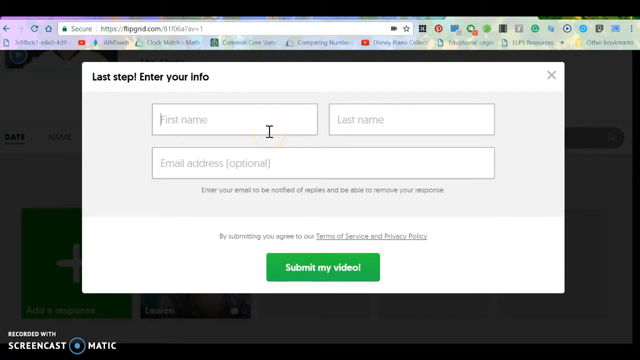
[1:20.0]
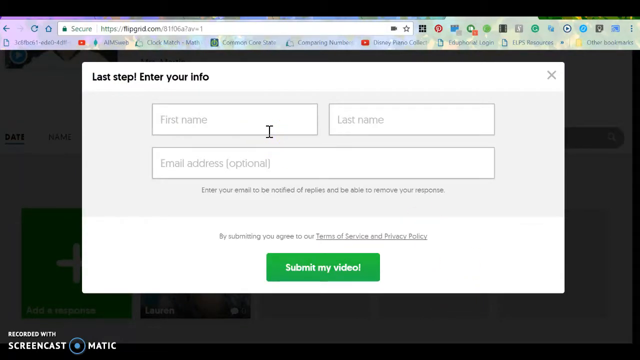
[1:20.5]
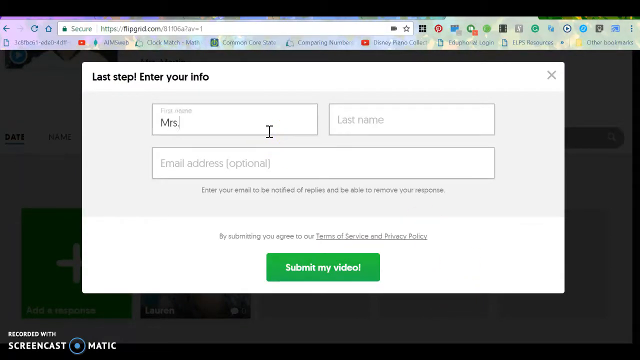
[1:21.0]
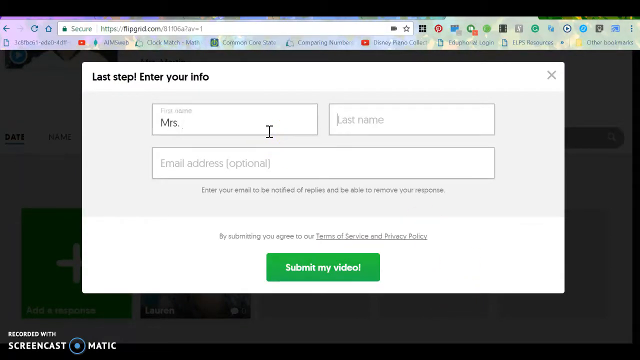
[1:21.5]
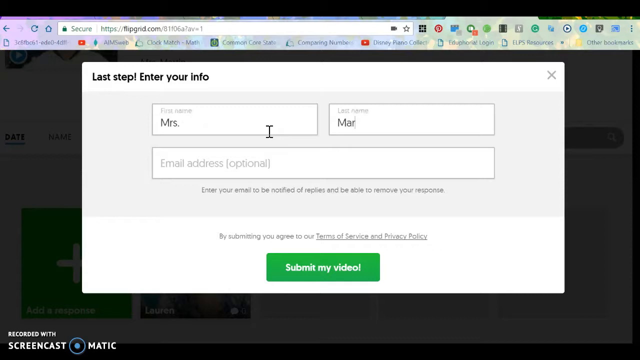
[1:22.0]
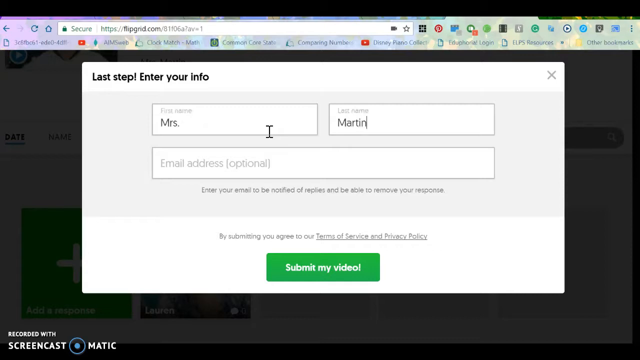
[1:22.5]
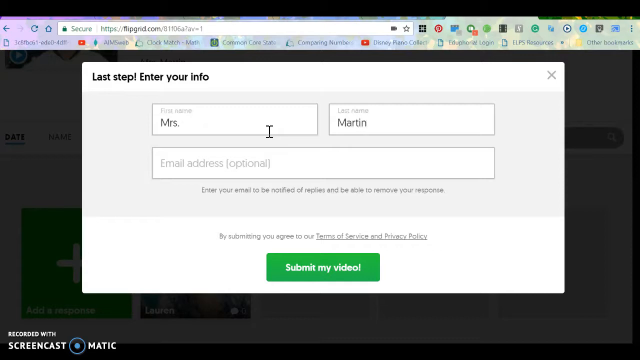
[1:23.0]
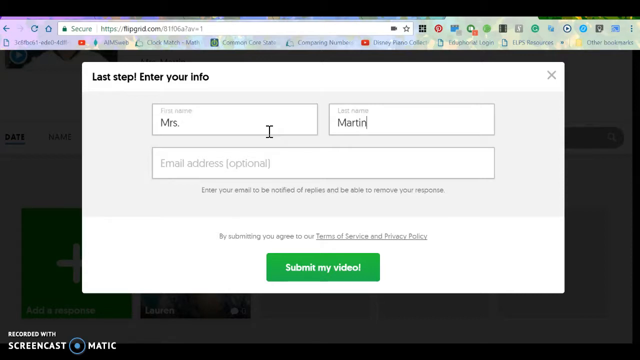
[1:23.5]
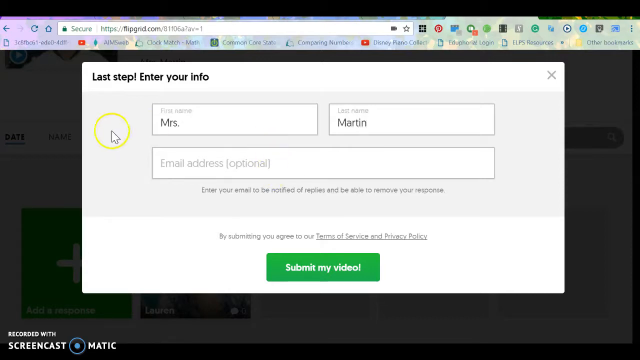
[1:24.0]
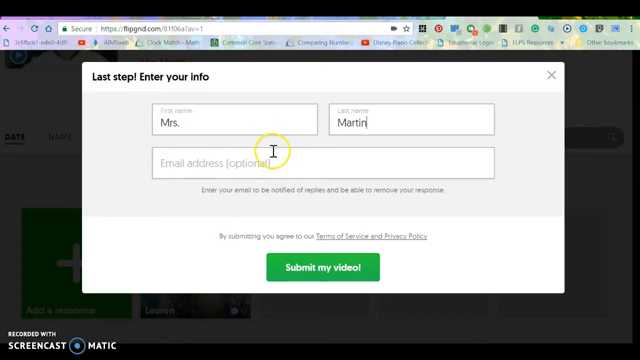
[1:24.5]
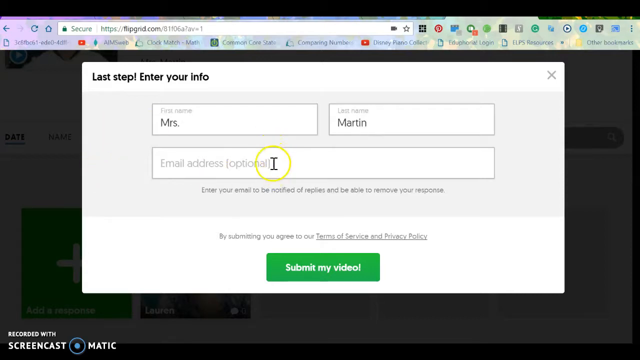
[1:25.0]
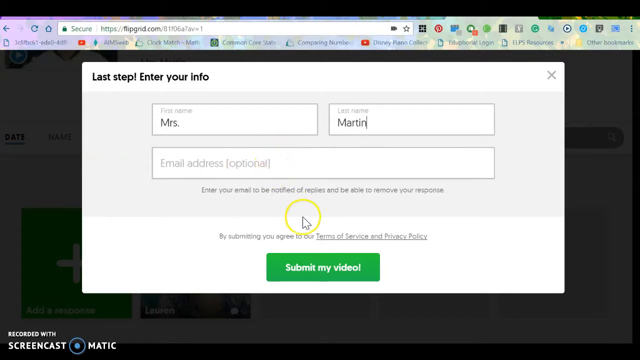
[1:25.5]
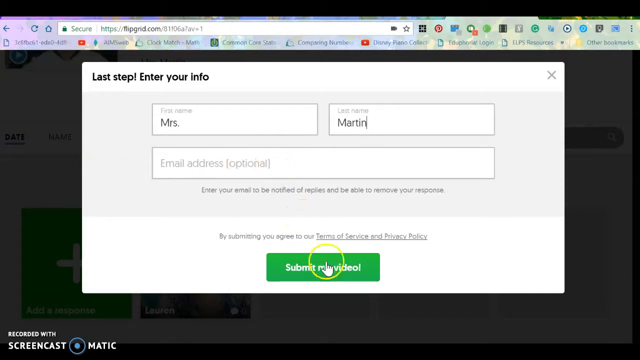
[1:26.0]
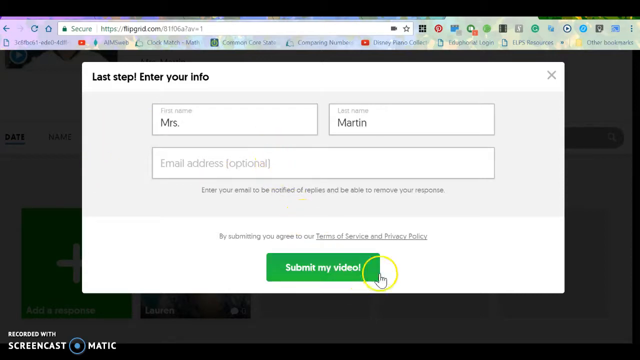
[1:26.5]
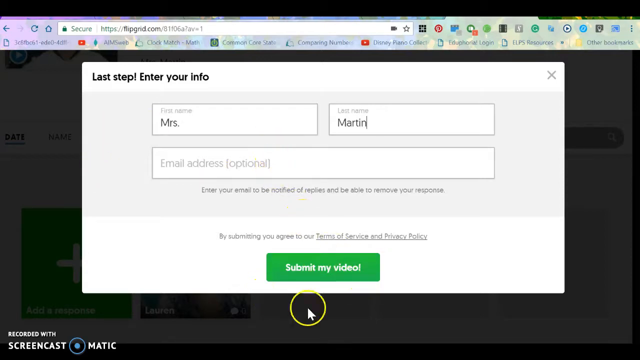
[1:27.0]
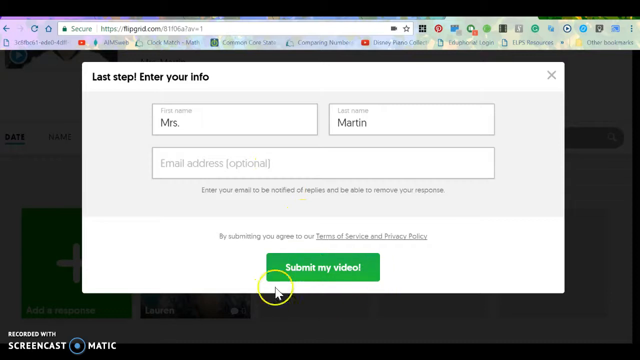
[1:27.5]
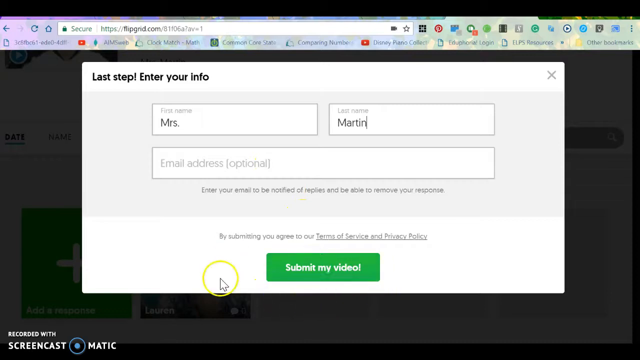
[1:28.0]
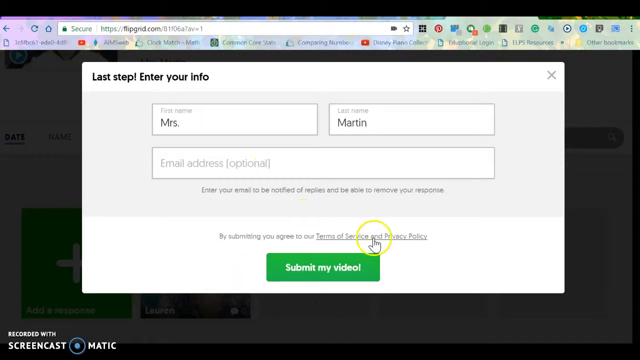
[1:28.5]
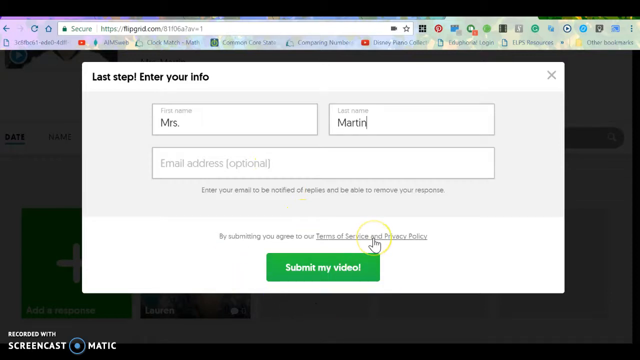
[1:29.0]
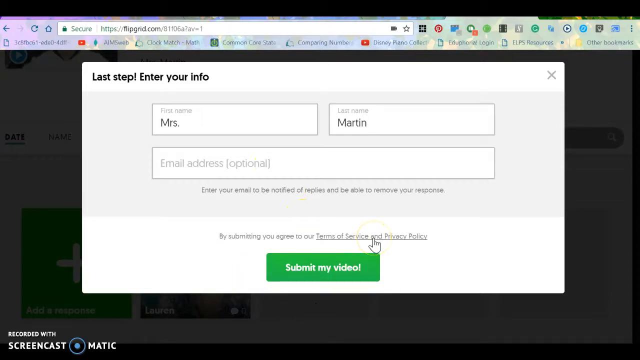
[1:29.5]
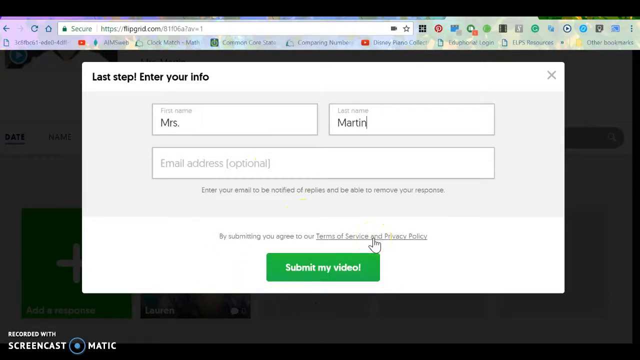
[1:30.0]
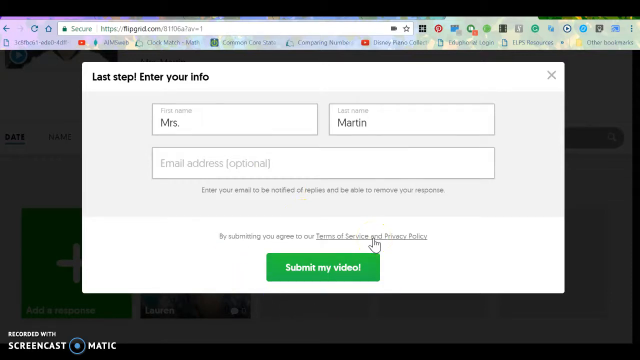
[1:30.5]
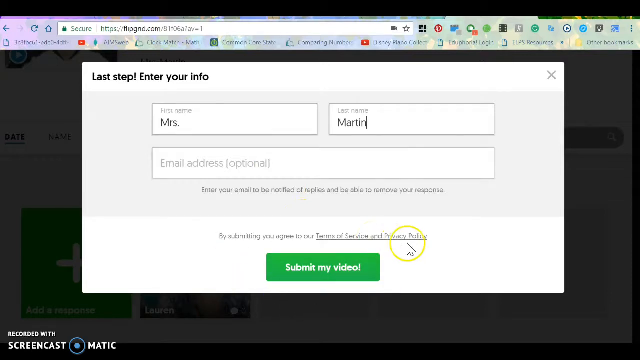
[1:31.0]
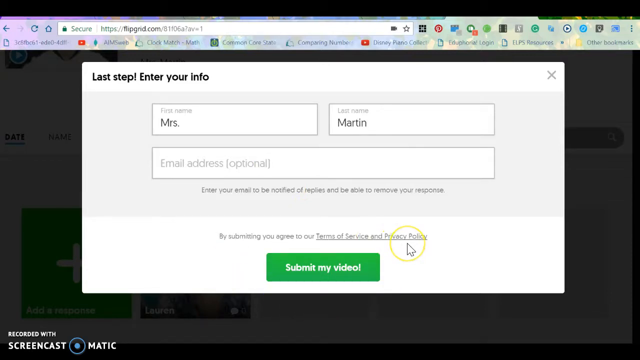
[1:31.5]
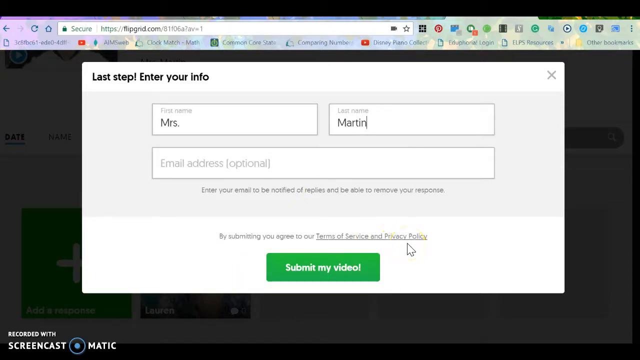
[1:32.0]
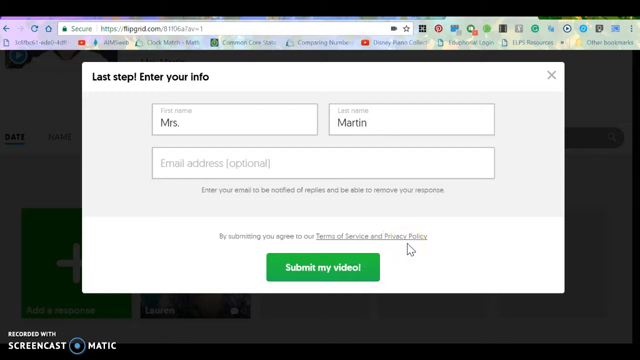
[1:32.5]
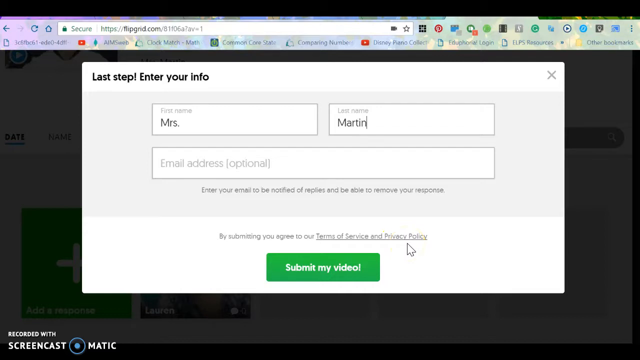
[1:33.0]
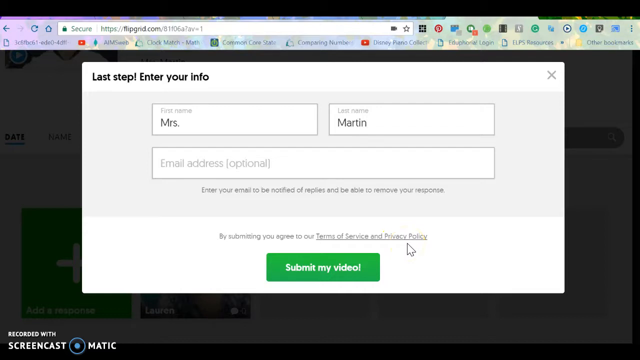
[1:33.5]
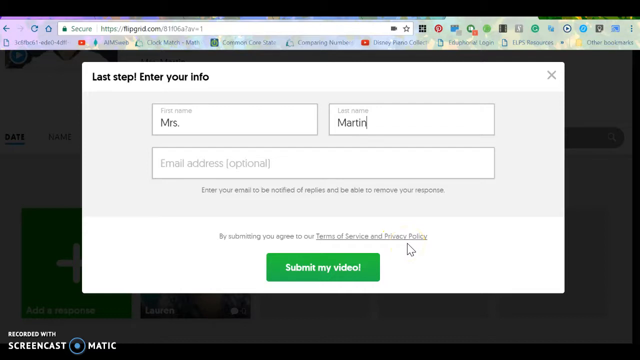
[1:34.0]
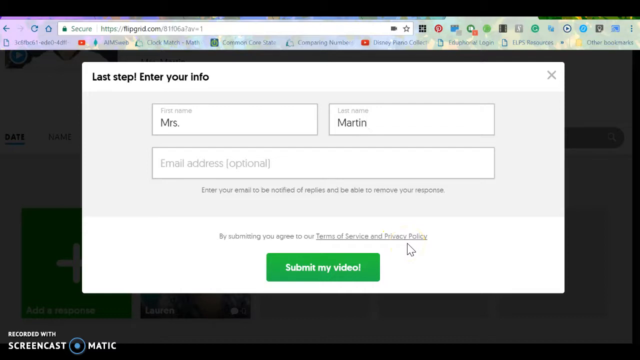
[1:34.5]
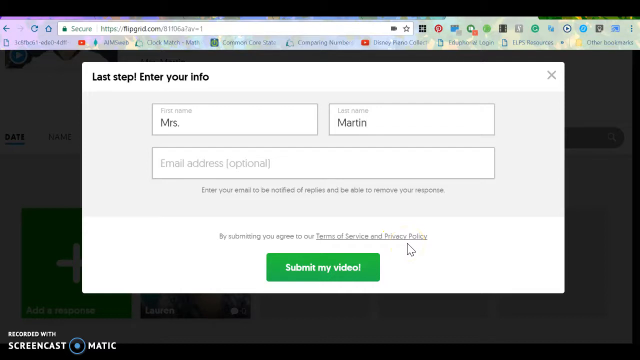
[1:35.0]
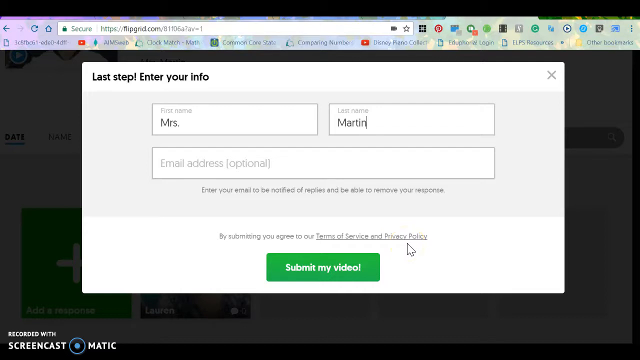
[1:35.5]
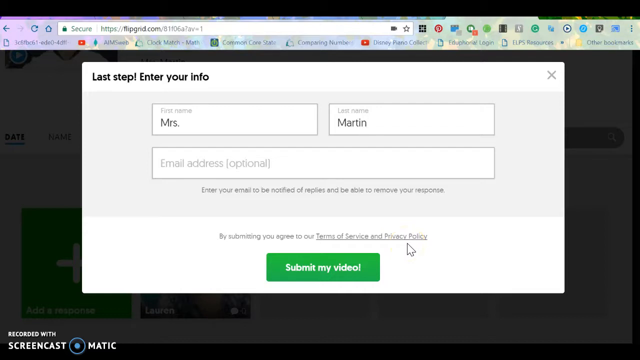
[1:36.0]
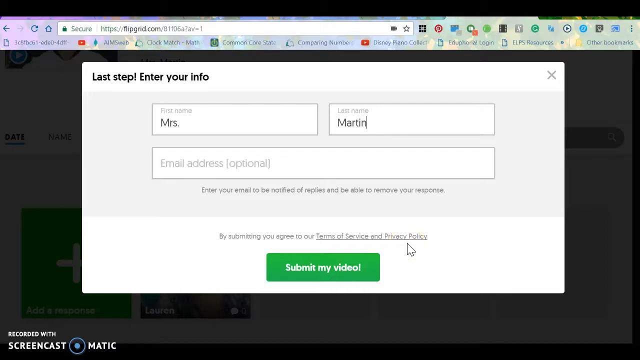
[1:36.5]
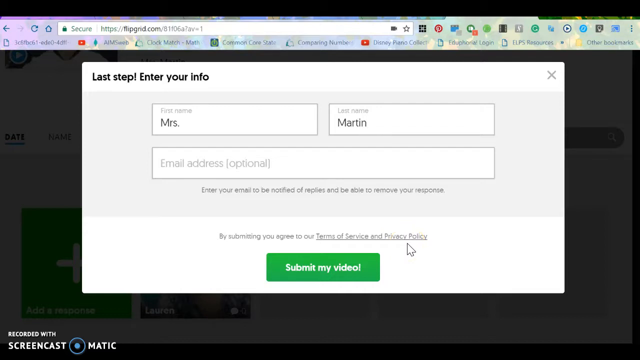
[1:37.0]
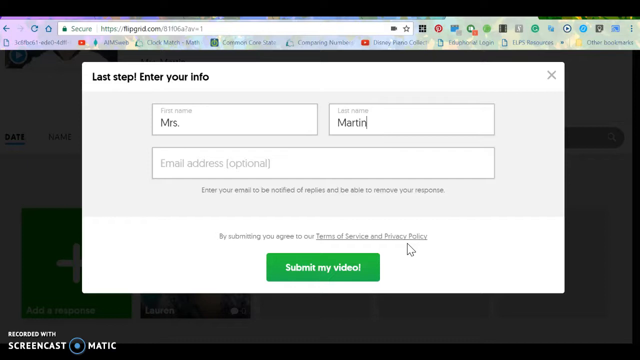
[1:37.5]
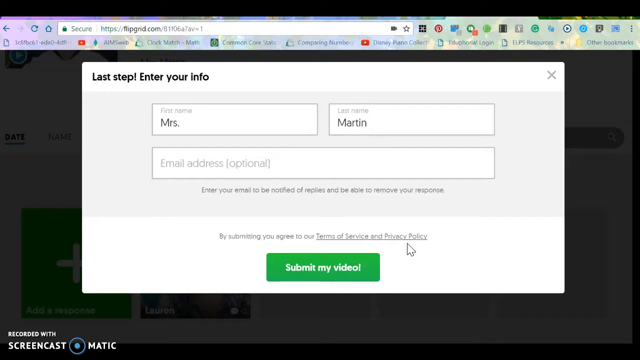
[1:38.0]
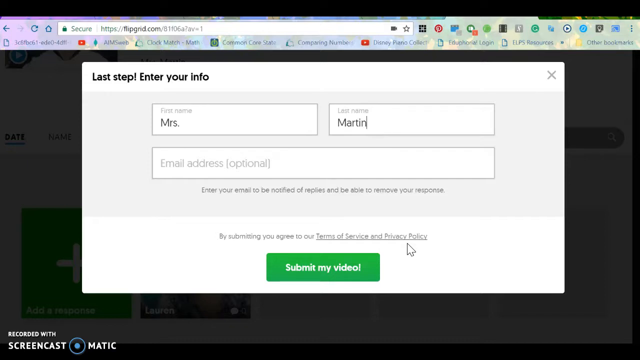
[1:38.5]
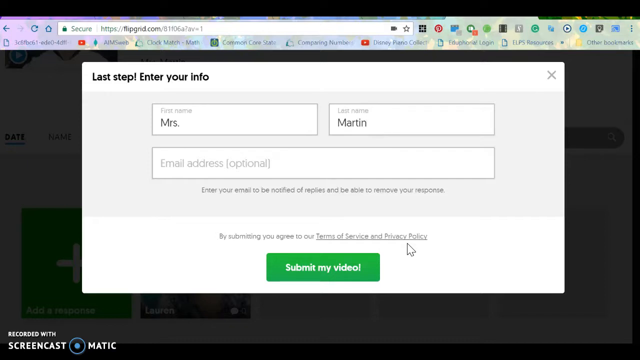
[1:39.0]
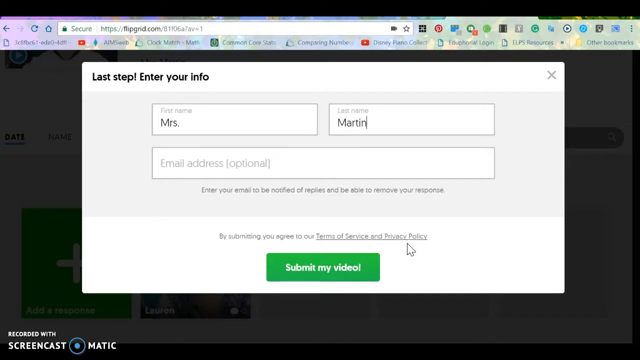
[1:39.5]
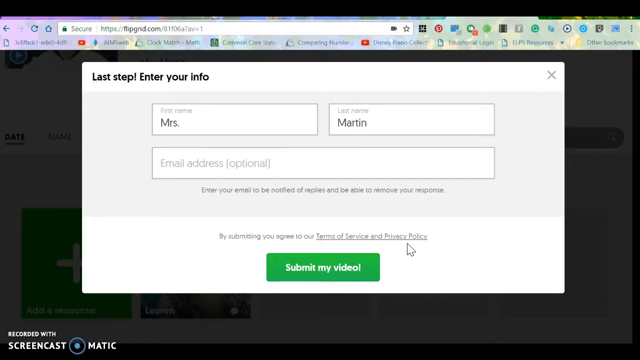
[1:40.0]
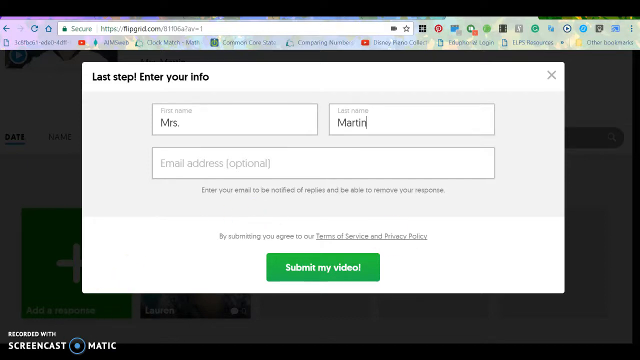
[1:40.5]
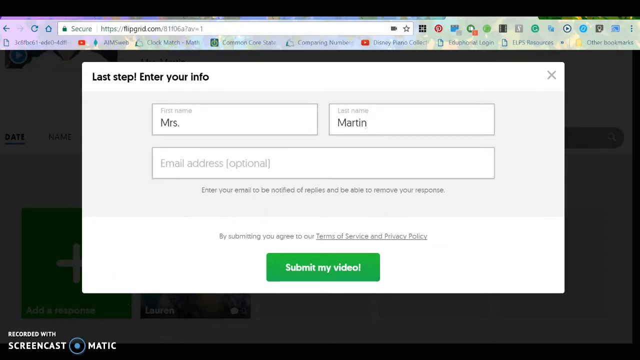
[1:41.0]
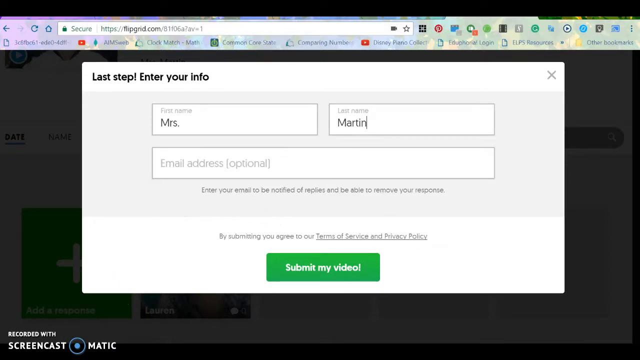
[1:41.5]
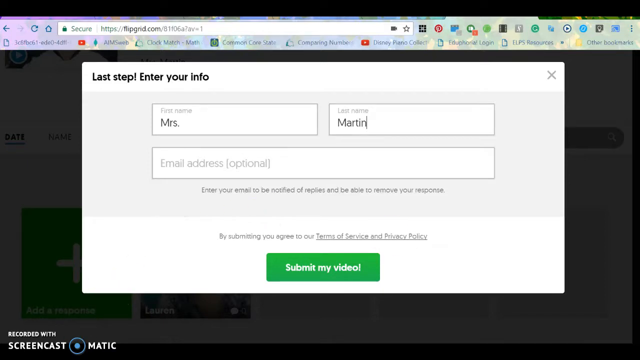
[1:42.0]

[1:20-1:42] The last step for entering info is shown, with fields for first name, last name and email address; "optional" is written by the email field. The option "submit my video" is there. She writes "Mrs. Martin" and then moves the mouse over the "submit my video" part, perhaps to indicate that the video can be submitted without entering the email. There is also an option to read the terms of service and privacy policy. The video pauses for a while; the person recording the screen might be Miss Martin, judging by the credentials entered, and then the video stops.